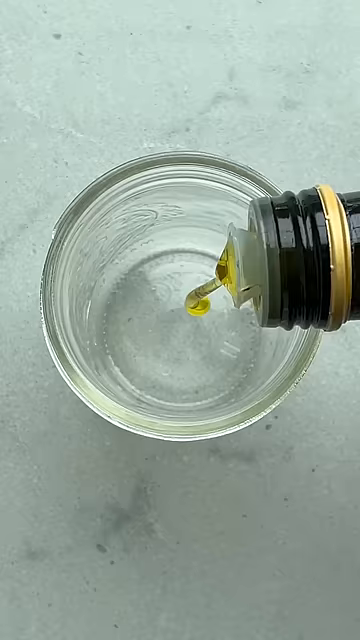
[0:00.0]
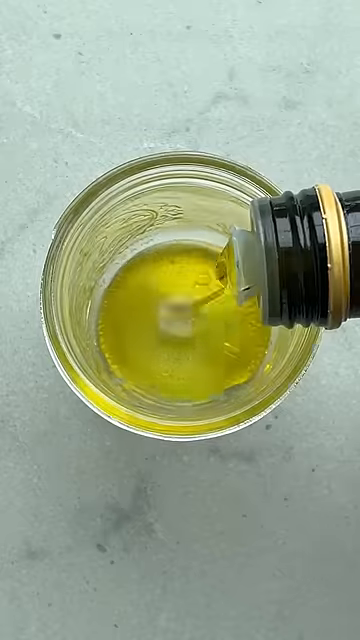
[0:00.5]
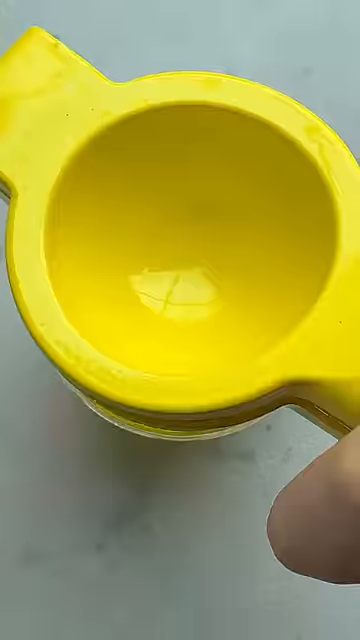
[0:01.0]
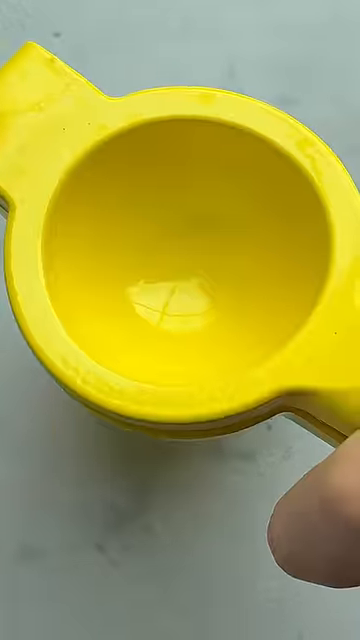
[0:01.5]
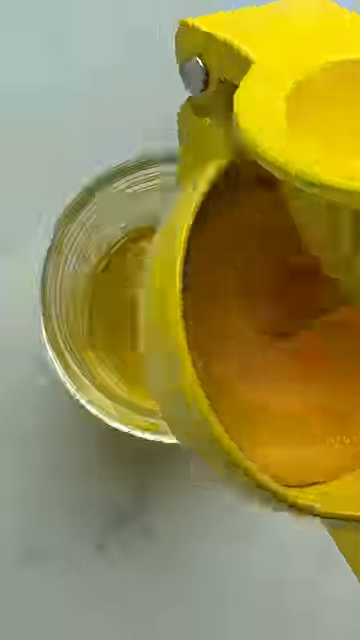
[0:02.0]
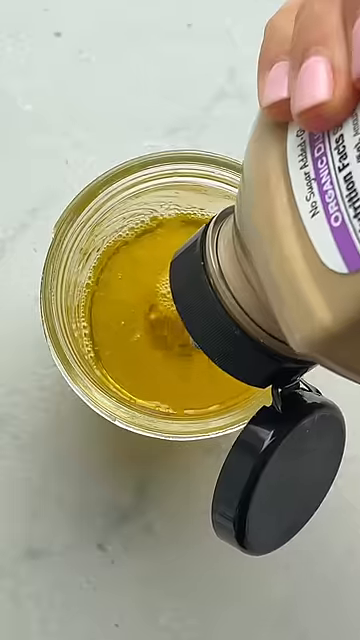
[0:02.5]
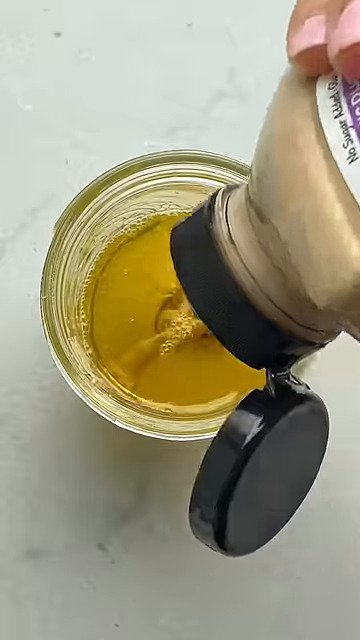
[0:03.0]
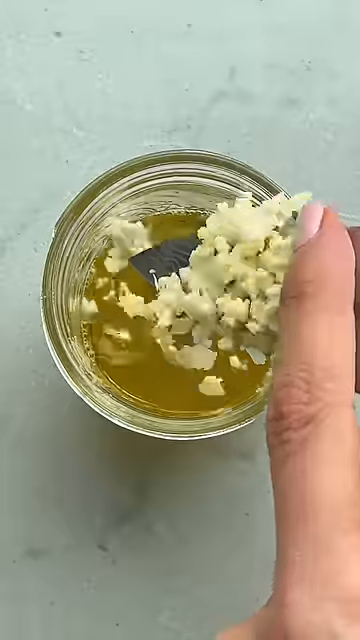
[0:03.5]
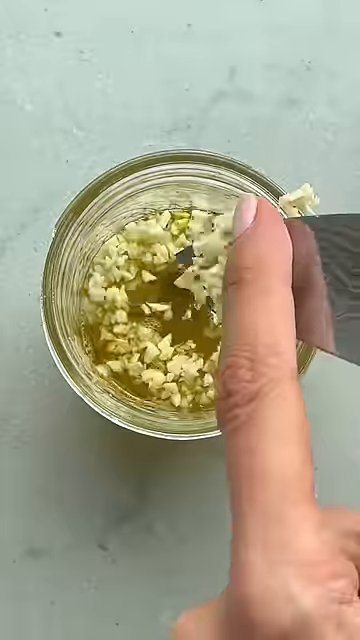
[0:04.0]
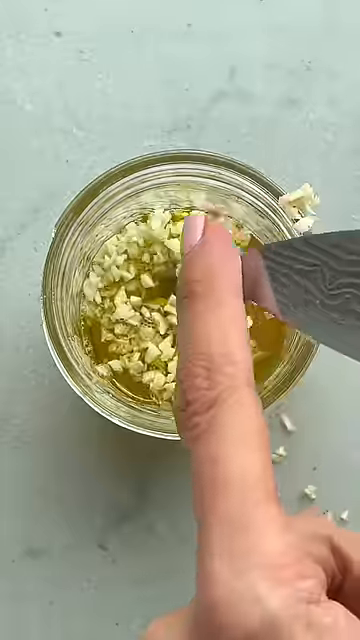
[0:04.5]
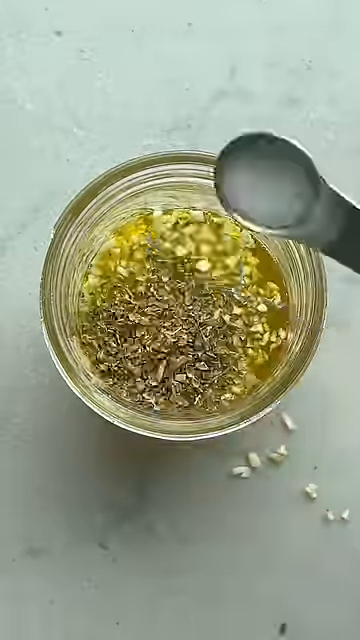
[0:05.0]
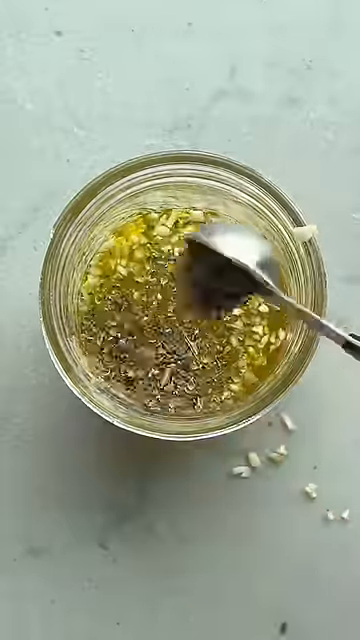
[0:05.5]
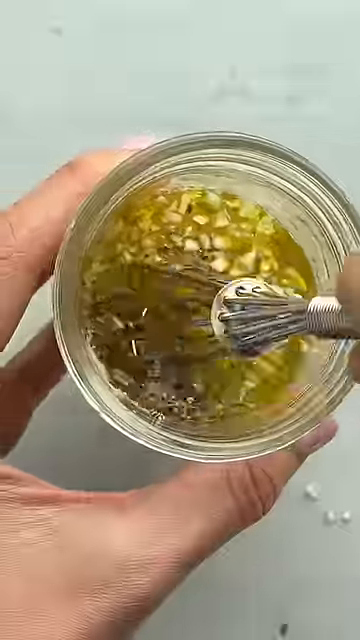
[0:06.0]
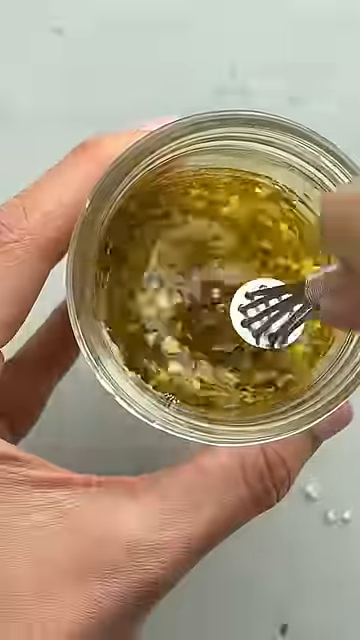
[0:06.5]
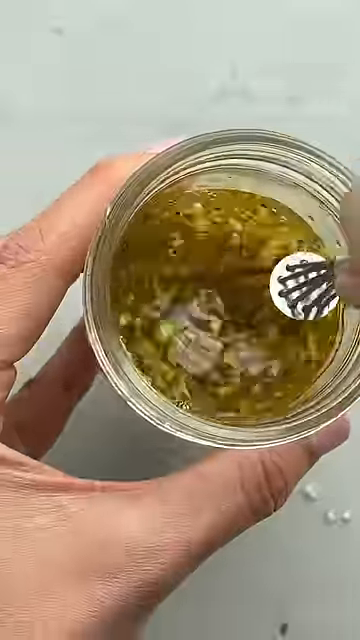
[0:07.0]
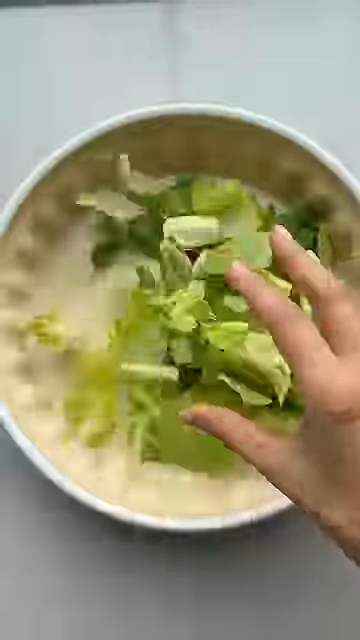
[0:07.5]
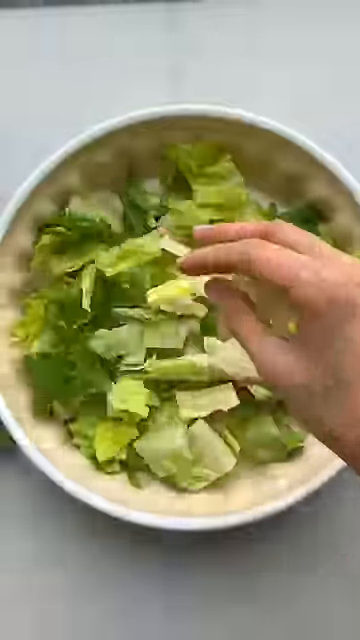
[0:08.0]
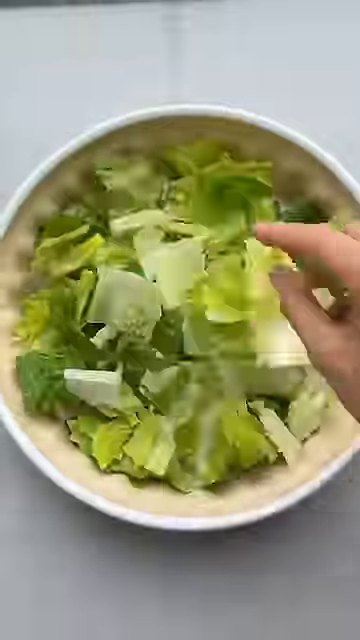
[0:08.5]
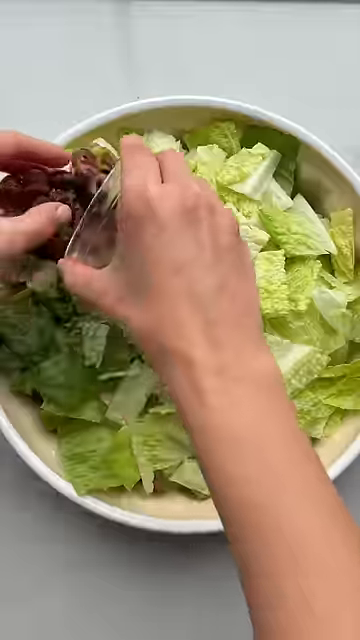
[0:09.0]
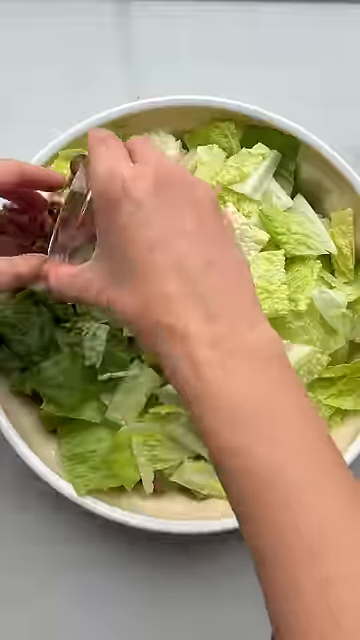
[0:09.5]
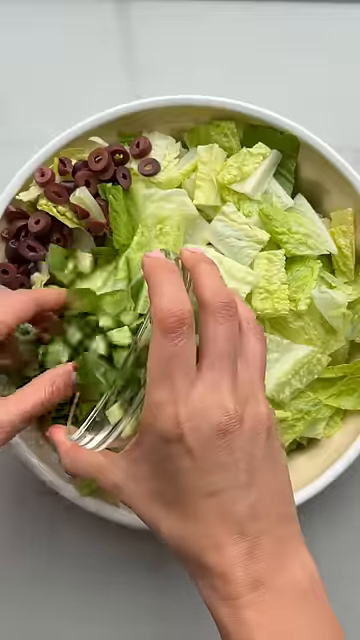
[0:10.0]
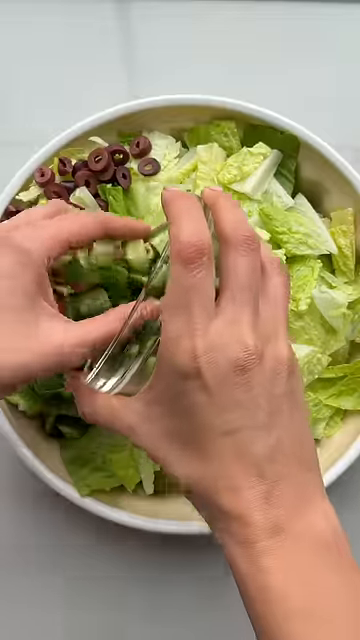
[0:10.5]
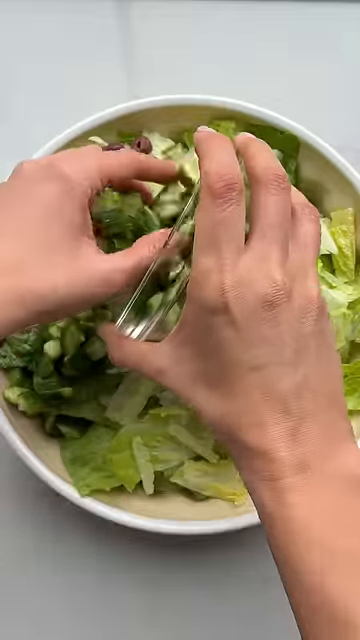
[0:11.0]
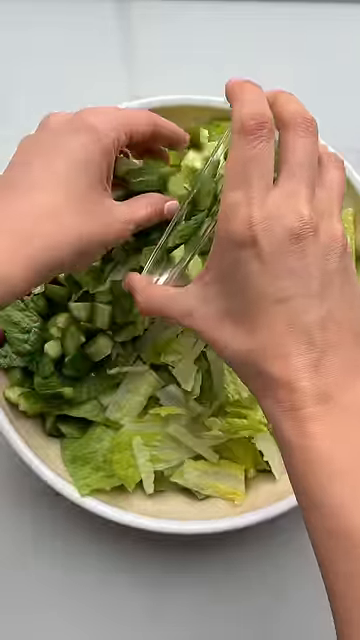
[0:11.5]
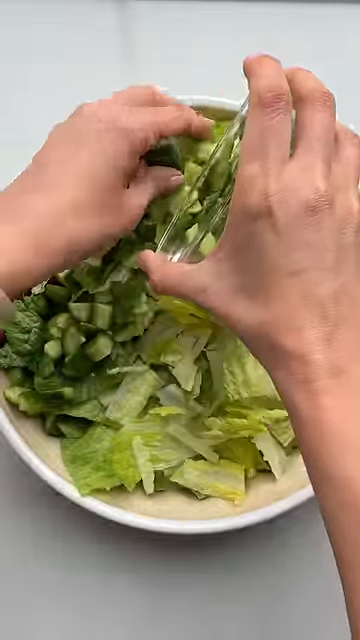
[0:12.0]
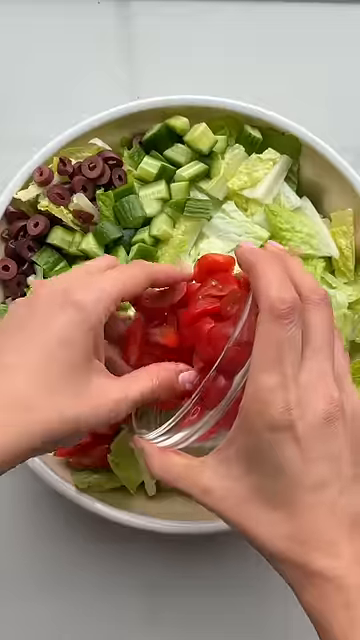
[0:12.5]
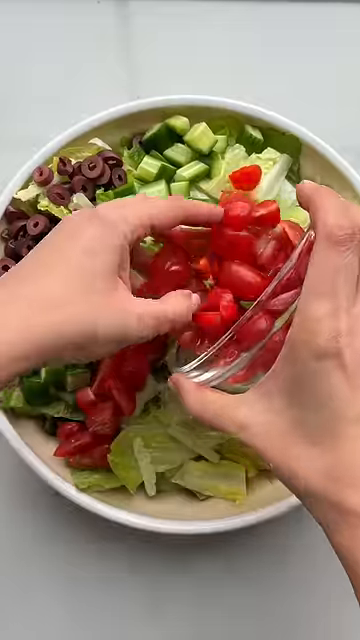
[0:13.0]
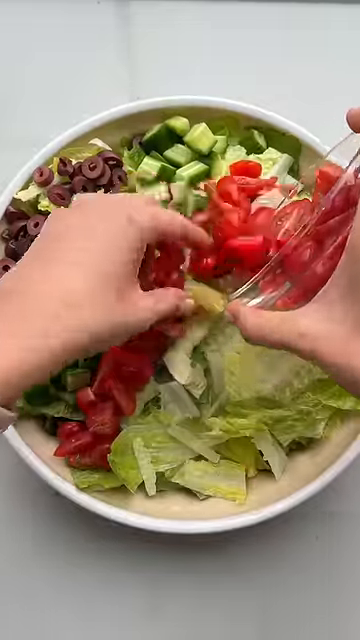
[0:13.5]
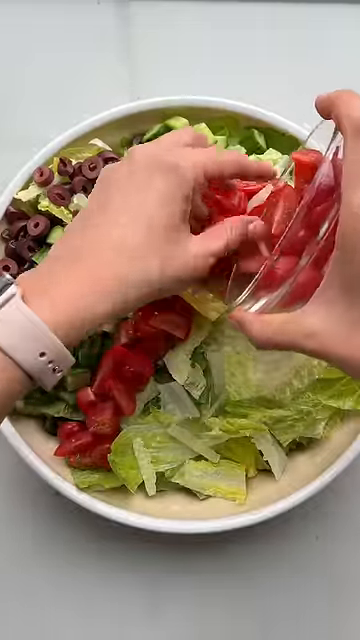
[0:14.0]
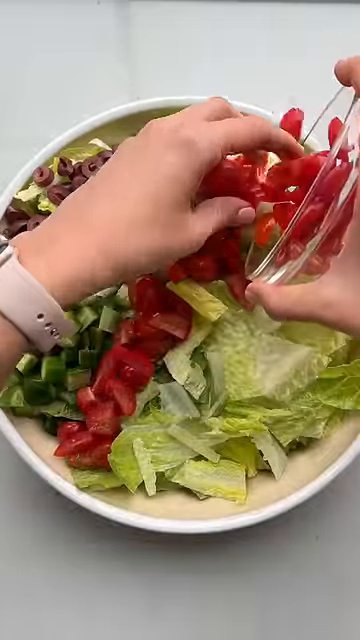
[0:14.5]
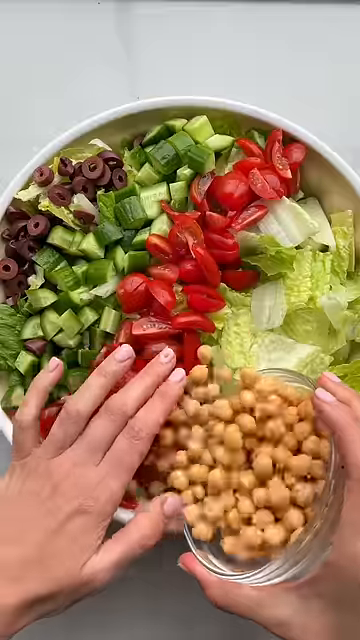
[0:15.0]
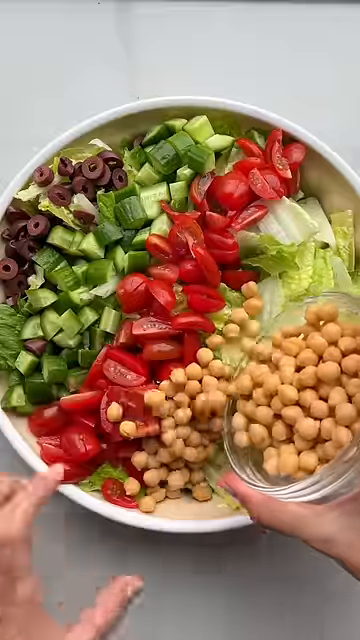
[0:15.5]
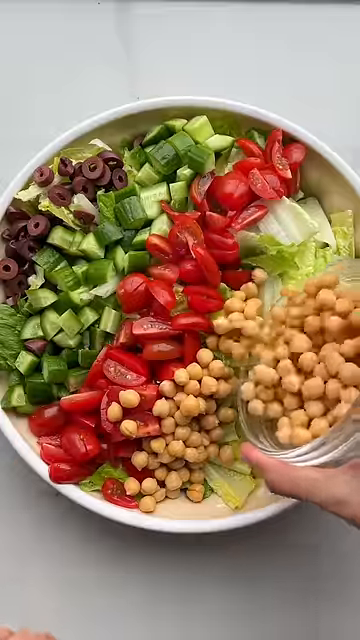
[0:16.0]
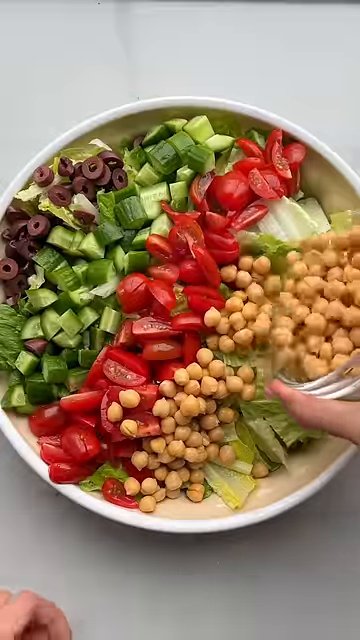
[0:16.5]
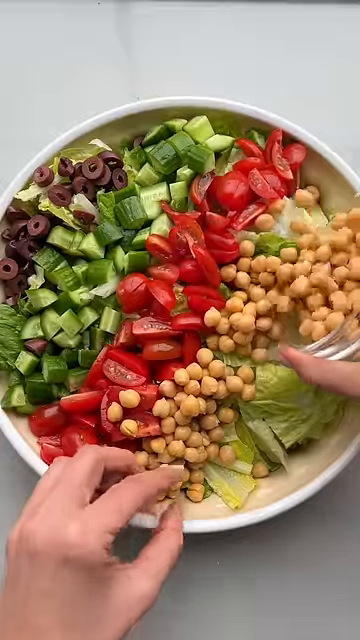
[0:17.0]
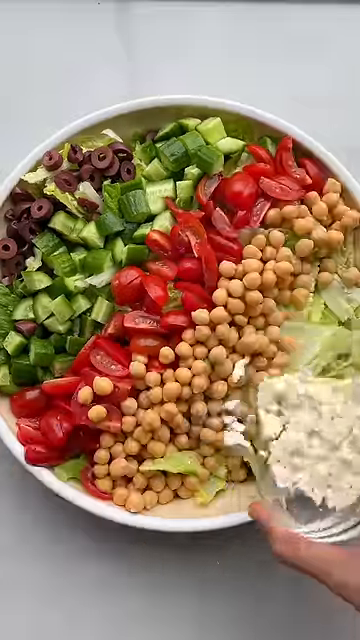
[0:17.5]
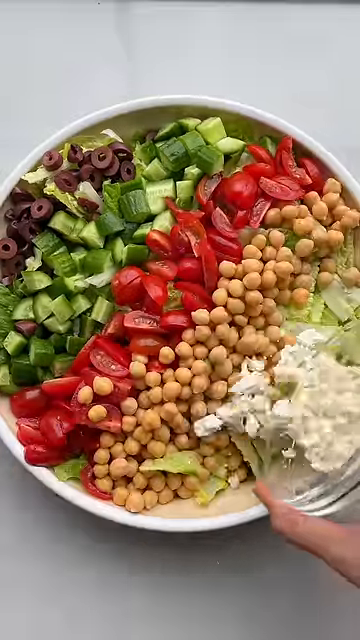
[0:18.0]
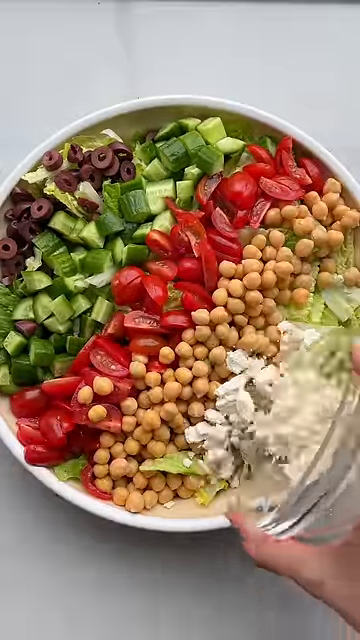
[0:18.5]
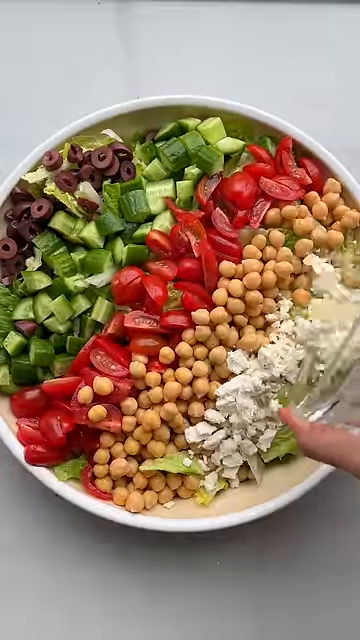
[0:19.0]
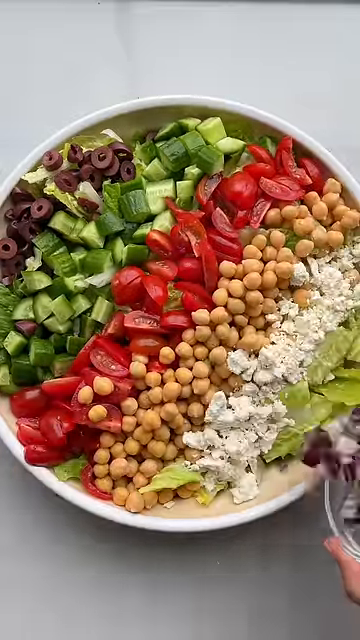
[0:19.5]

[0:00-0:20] A cup holds seasonings, and a plate holds lettuce, onion, olive oils, cucumbers, olives, chickpeas, cheese and red onions. There is a yellow lemon press, along with chopped garlic, pepper, salt and a whisk. Lettuce is put into a bowl, and a hand adds tomatoes, cucumbers, chickpeas, cheese and red onions. Olive oil, lemon, mustard, minced garlic, salt and pepper appear. A manicured hand puts ingredients, including chickpeas, on a plate. There is a cup with a knife, plus garlic, pepper and salt. A hand puts chopped lettuce onto a plate, with red tomatoes, chickpeas, cucumbers, olives, cheese and red onions. Olive oil, lemon, mustard, garlic, pepper and salt are shown, followed by whisking. Olives, cucumbers, tomatoes, chickpeas and cheese appear.